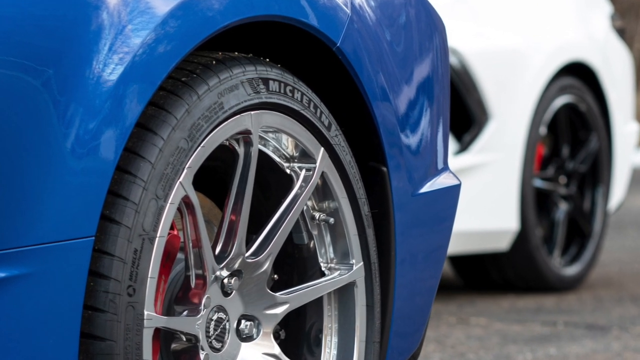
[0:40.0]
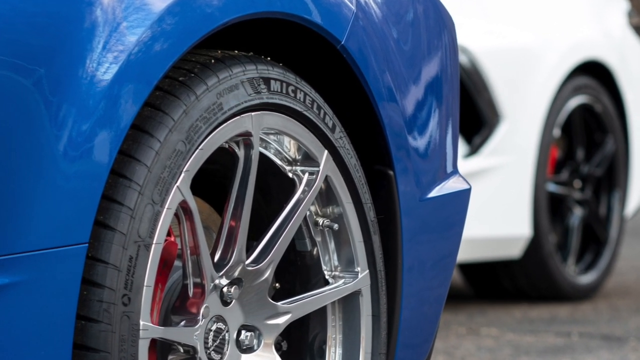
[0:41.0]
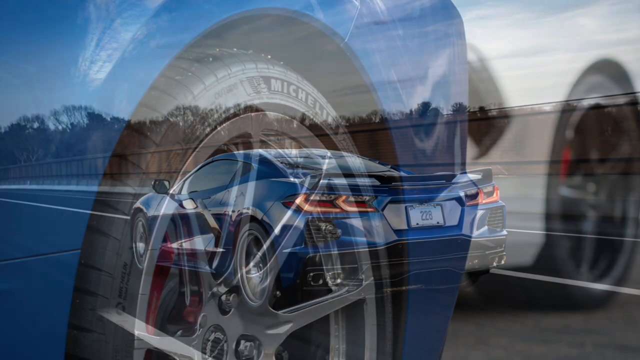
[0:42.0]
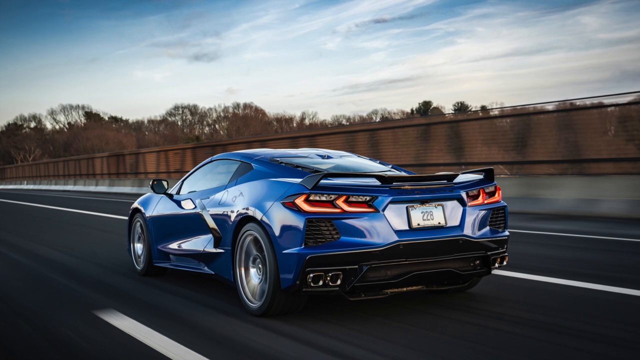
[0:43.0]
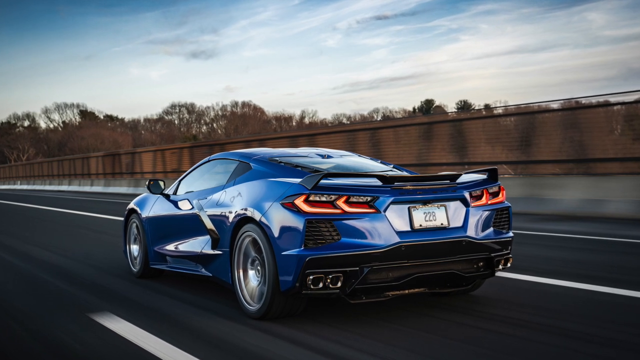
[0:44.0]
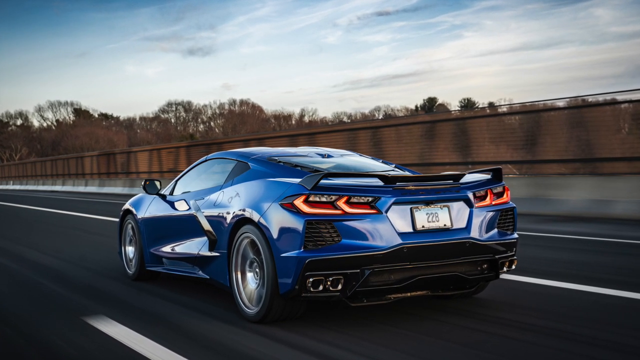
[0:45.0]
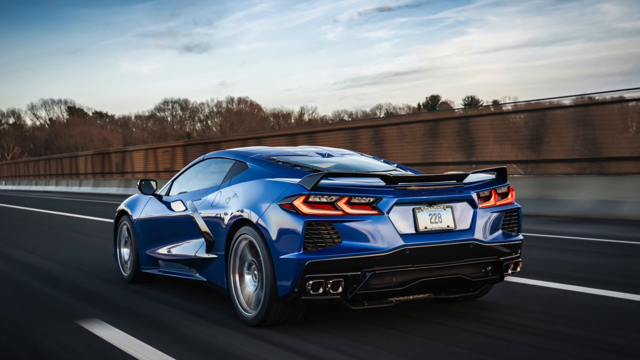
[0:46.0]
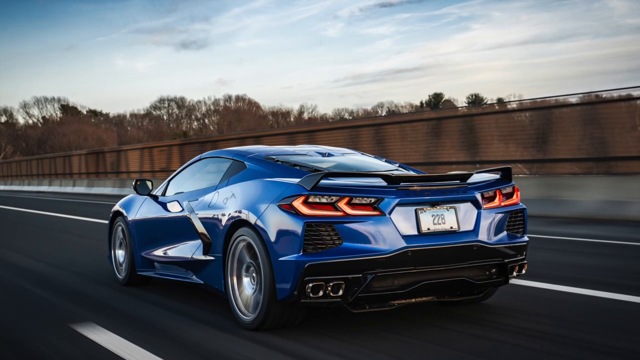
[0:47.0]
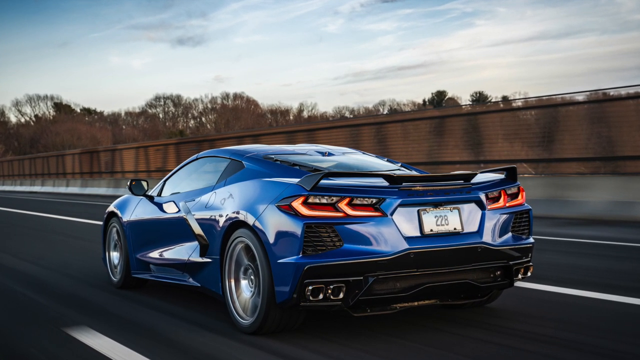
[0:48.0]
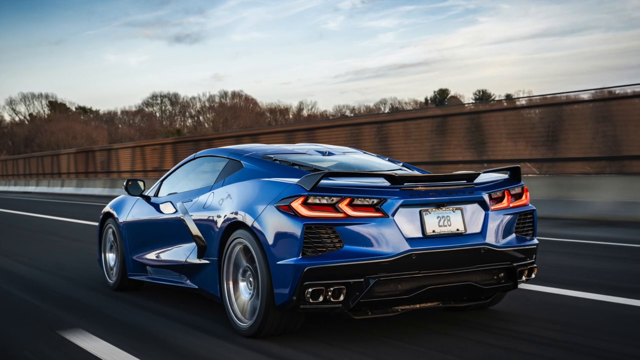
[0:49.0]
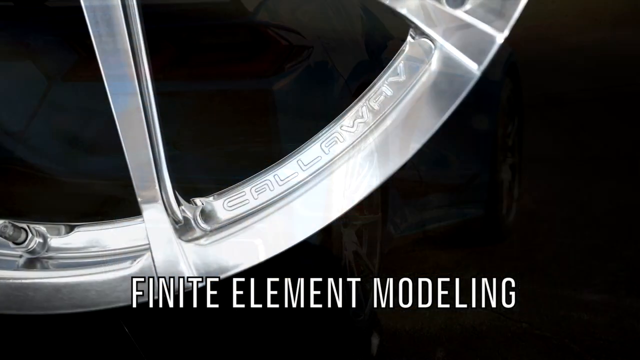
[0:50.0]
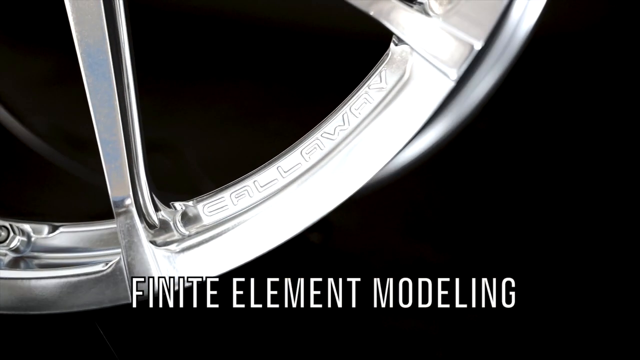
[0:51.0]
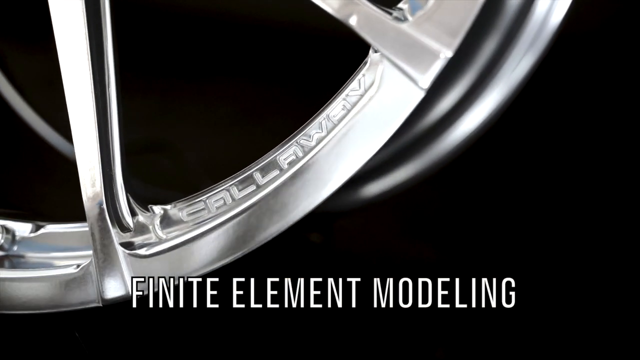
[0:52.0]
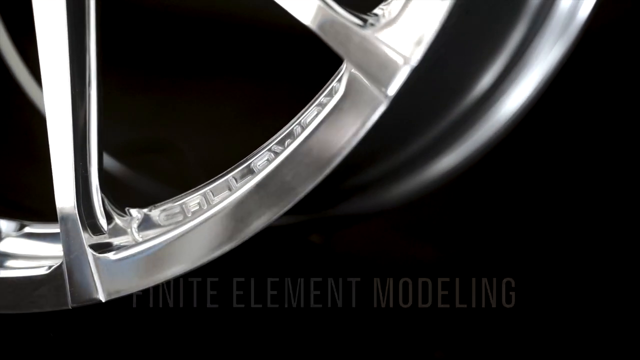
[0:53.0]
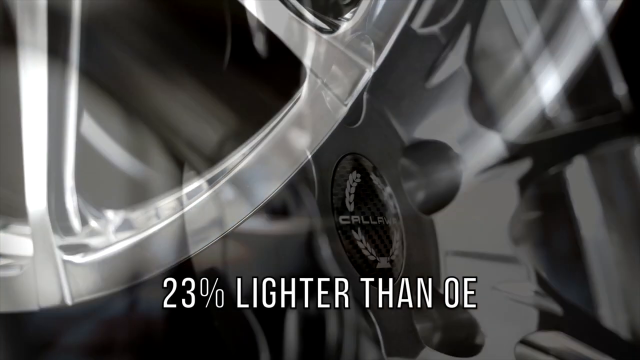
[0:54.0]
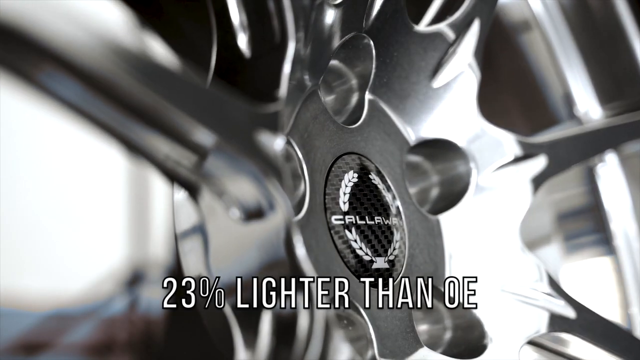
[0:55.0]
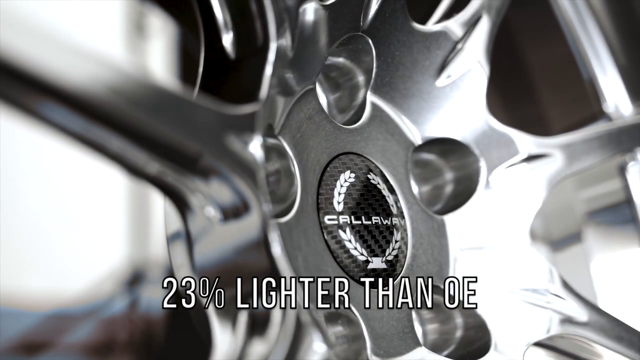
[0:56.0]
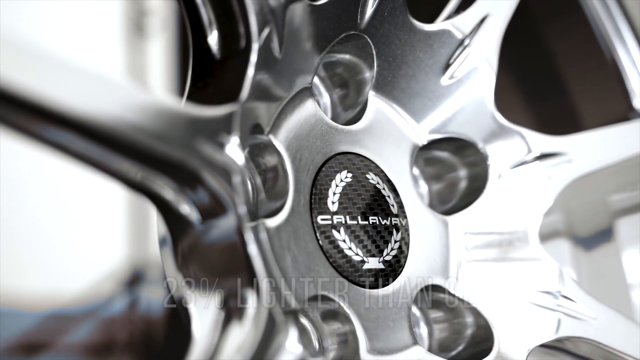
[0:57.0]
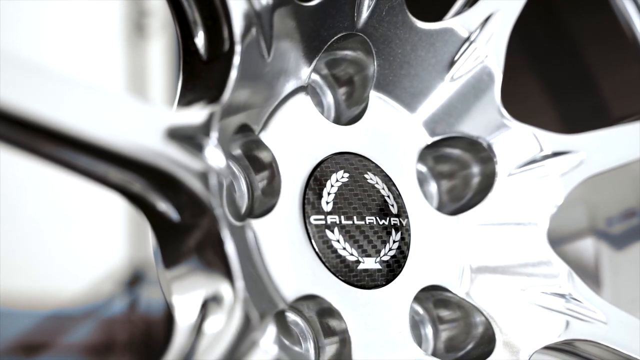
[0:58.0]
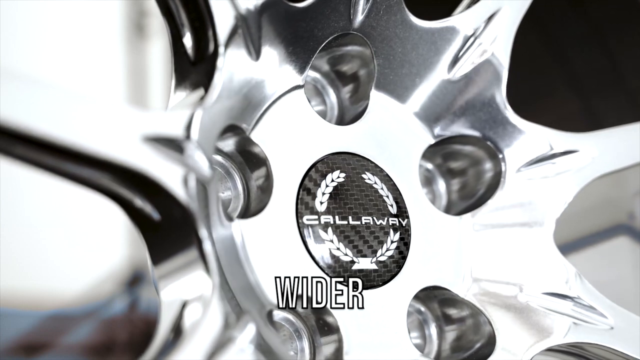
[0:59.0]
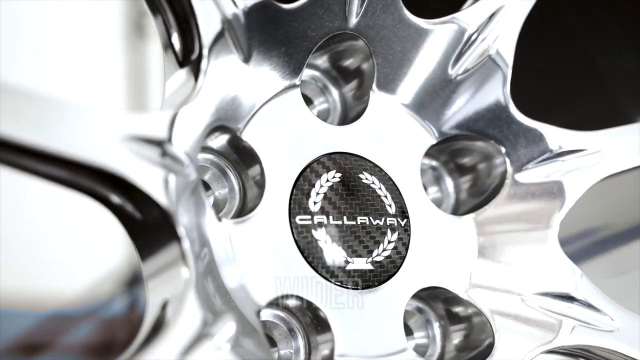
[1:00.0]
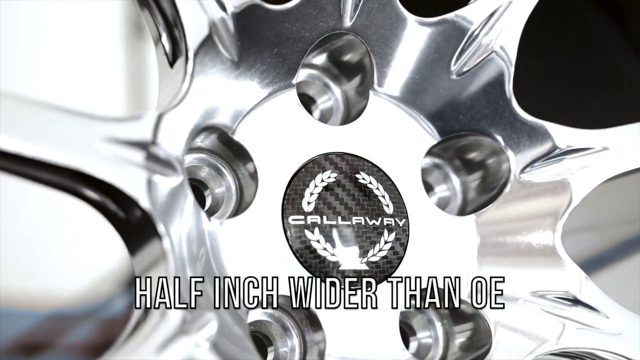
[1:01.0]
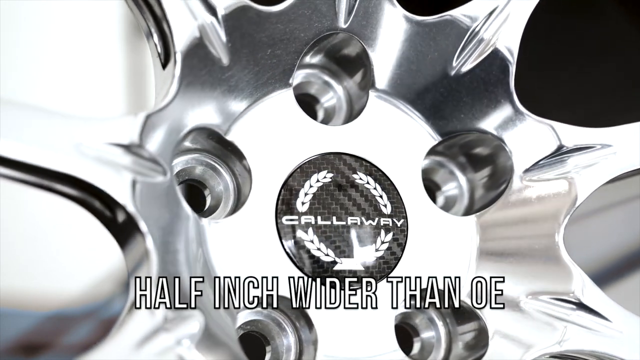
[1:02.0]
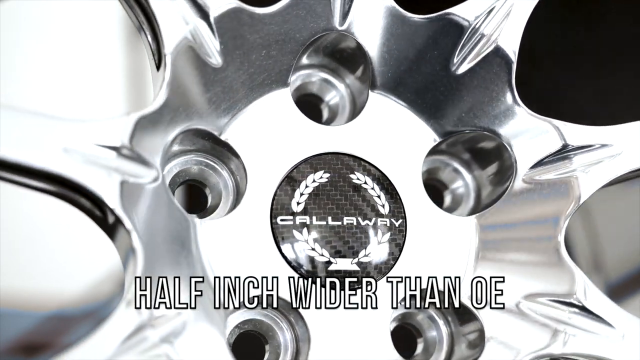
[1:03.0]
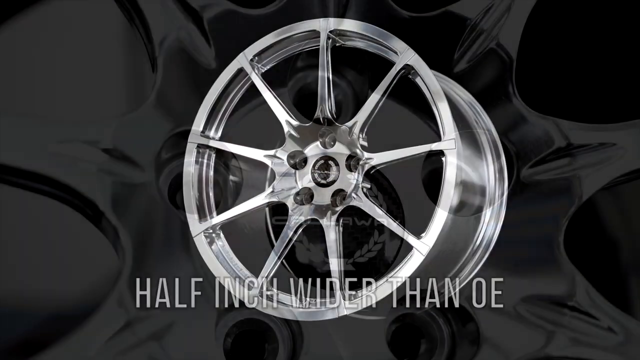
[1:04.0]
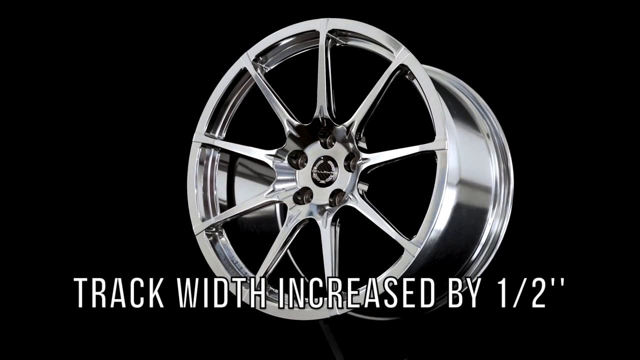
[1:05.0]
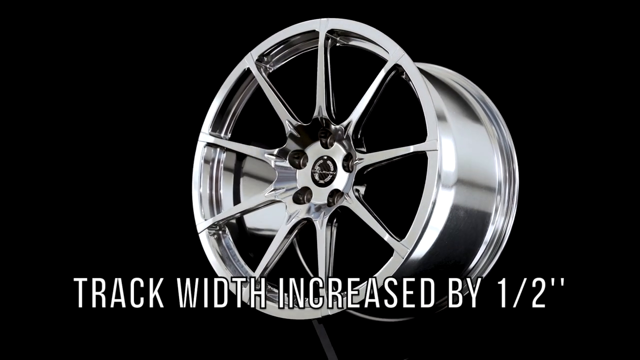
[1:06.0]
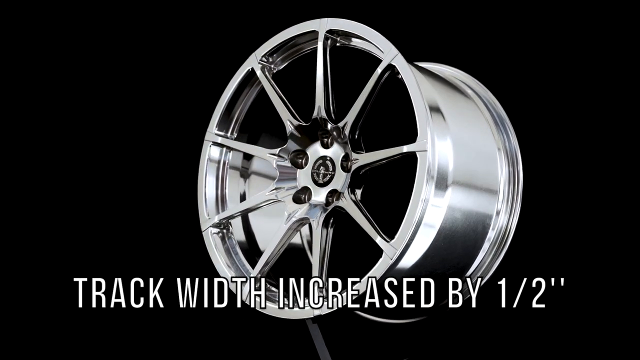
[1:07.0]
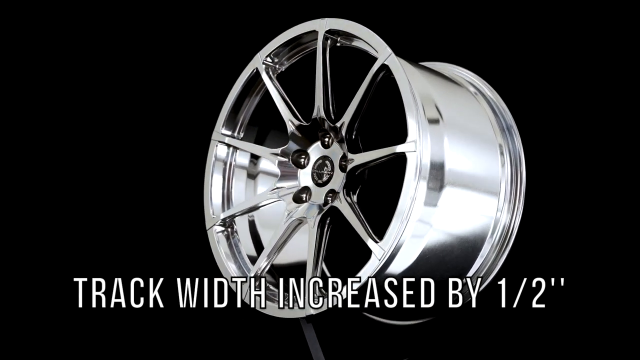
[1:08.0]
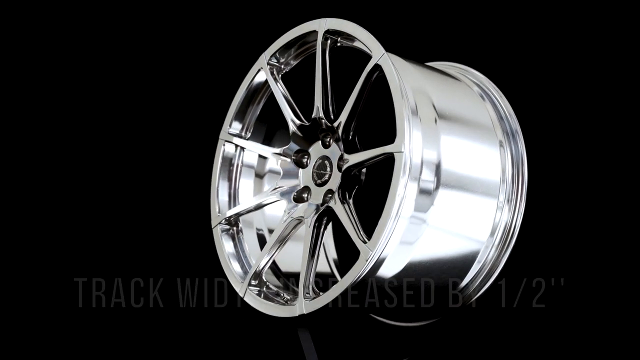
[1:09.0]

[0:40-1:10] The rims are shown on cars: a white car in the background has black rims, and a blue car in the foreground has polished silver rims. The full car, a Corvette, then appears in an action photo as it drives down the road, with its rims spinning. Text on the screen reads "finite element modeling." The Callaway logo is visible in the very center of the rim, between the holes where the lug nuts go. More text says the rims are "half inch wider than OE," with track width increased by one half an inch, and mentions "less unsprung mass."